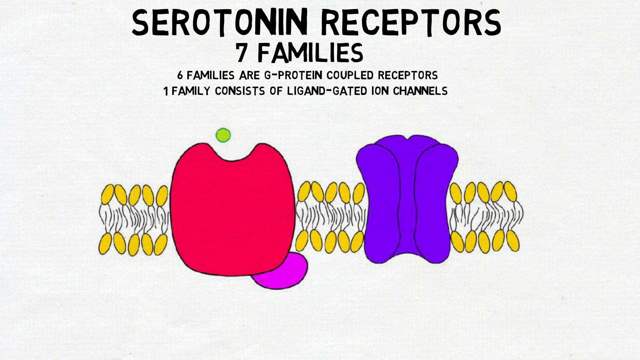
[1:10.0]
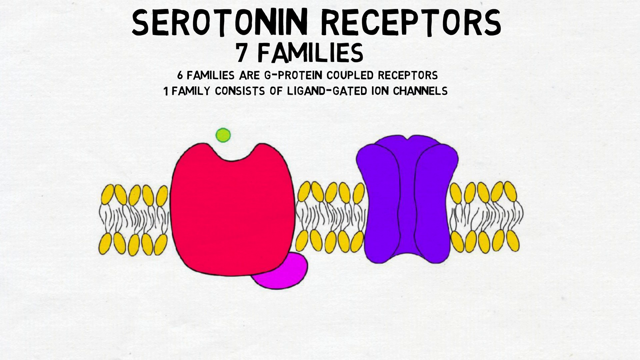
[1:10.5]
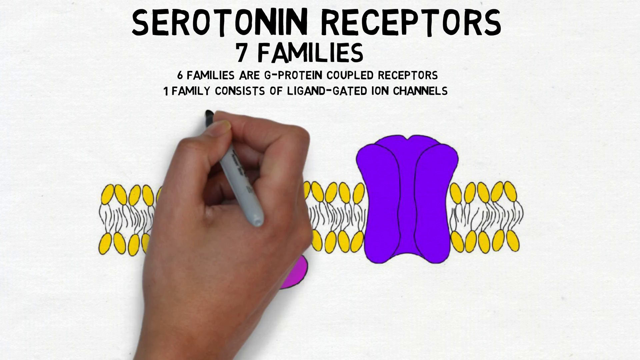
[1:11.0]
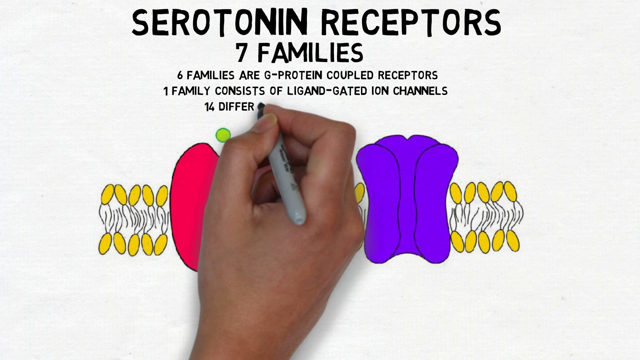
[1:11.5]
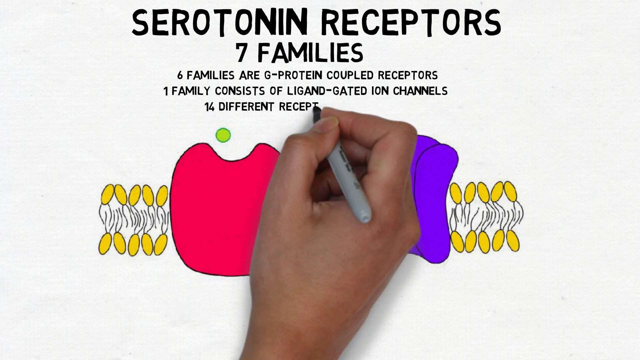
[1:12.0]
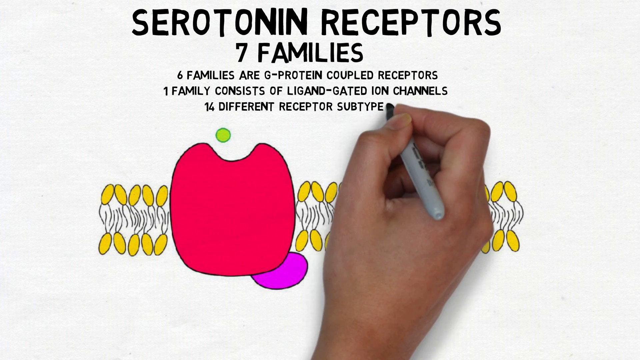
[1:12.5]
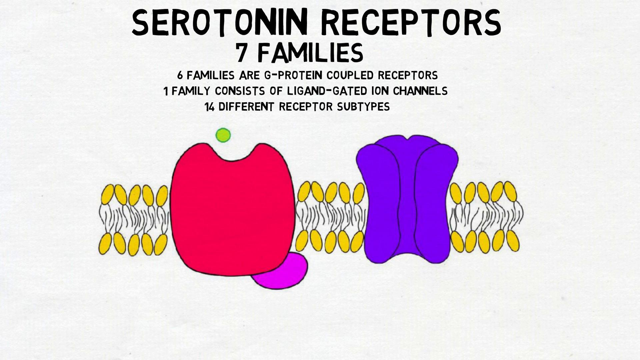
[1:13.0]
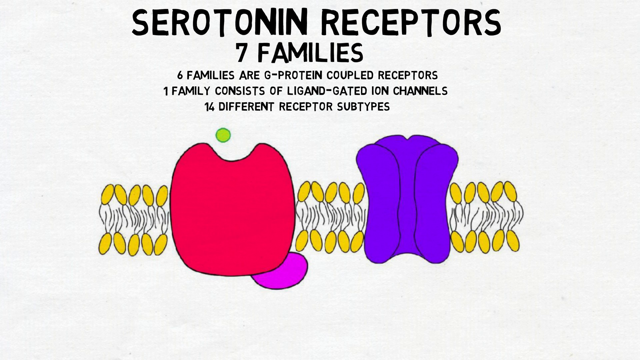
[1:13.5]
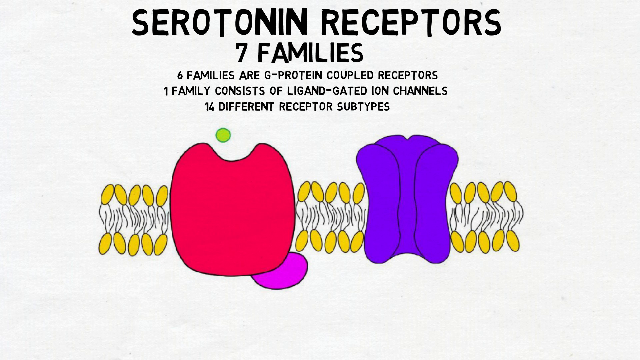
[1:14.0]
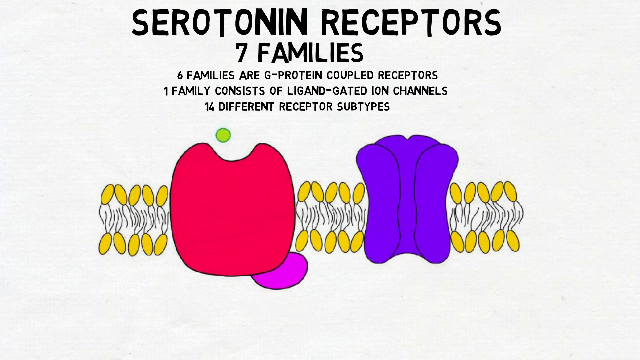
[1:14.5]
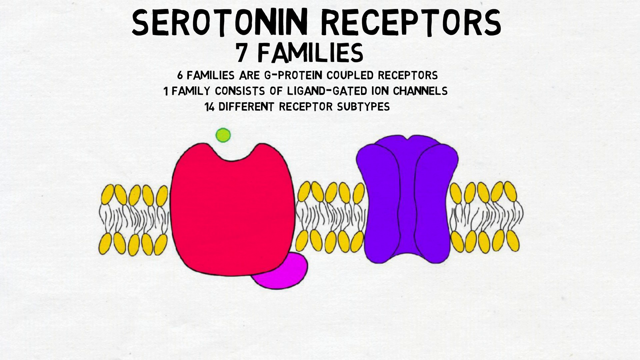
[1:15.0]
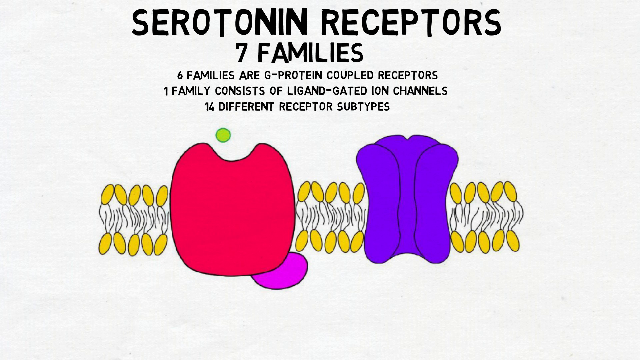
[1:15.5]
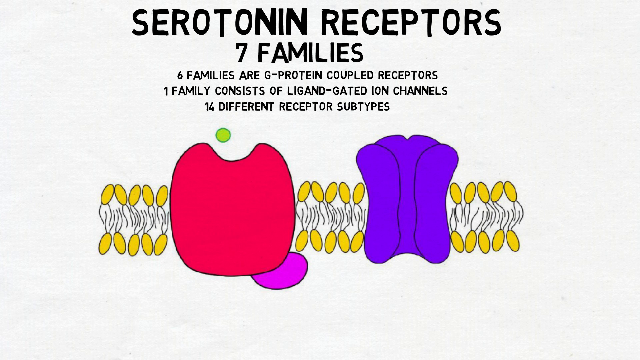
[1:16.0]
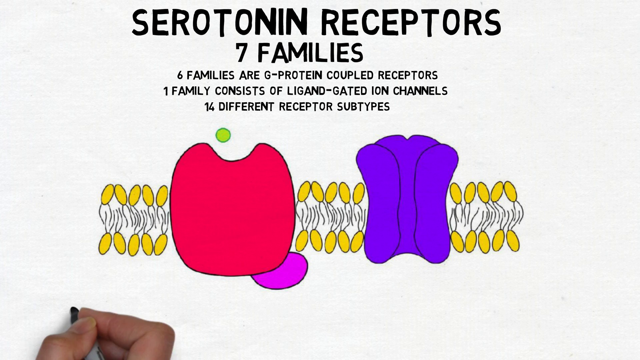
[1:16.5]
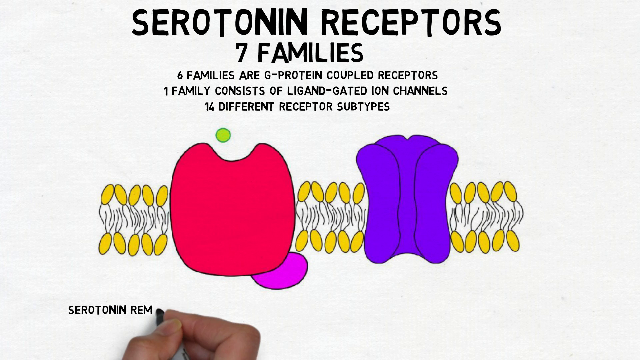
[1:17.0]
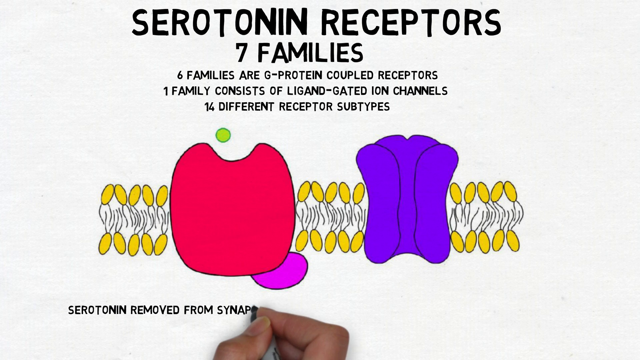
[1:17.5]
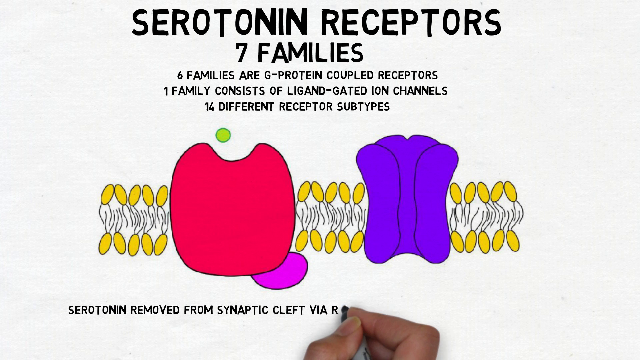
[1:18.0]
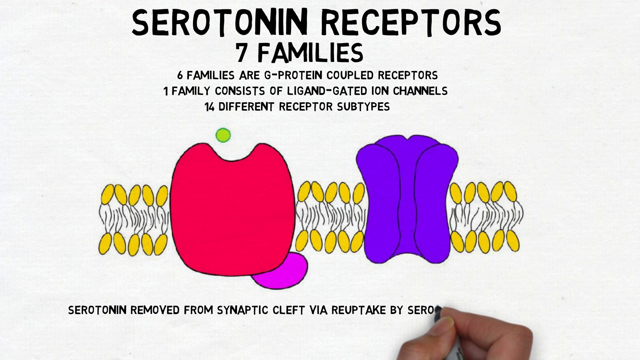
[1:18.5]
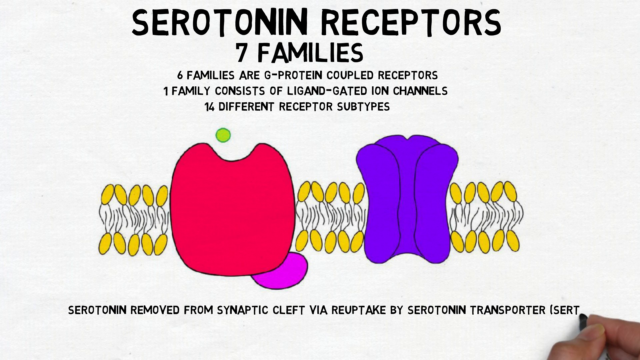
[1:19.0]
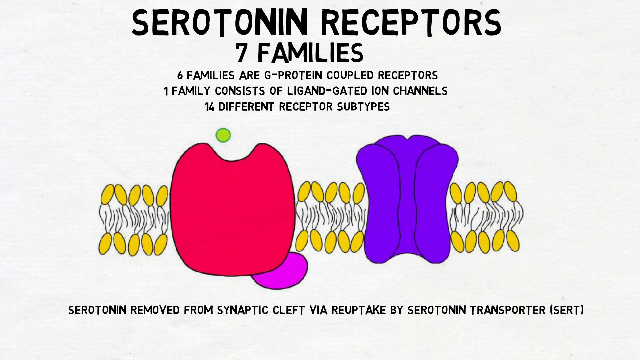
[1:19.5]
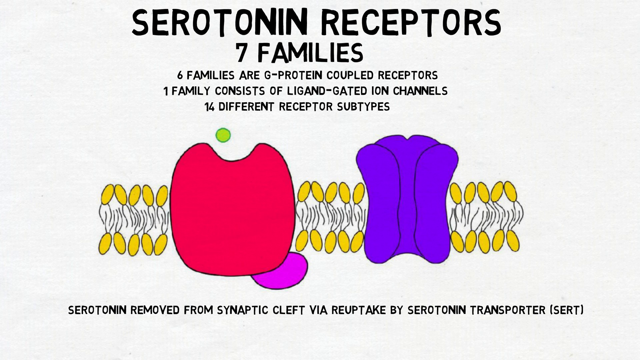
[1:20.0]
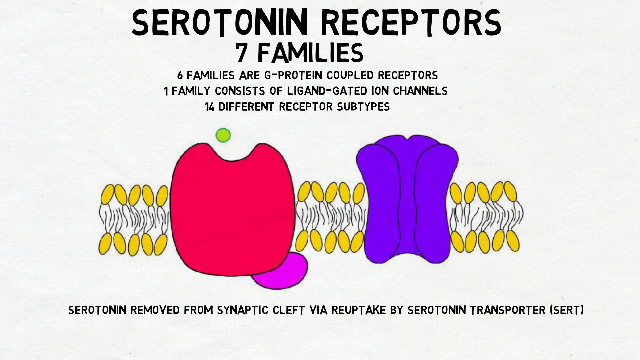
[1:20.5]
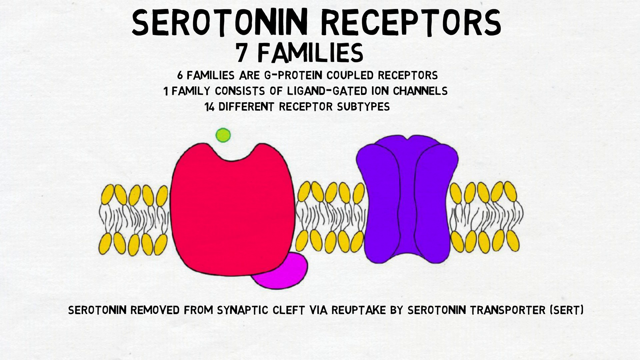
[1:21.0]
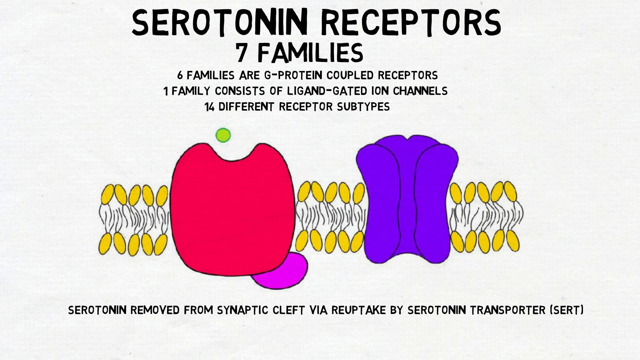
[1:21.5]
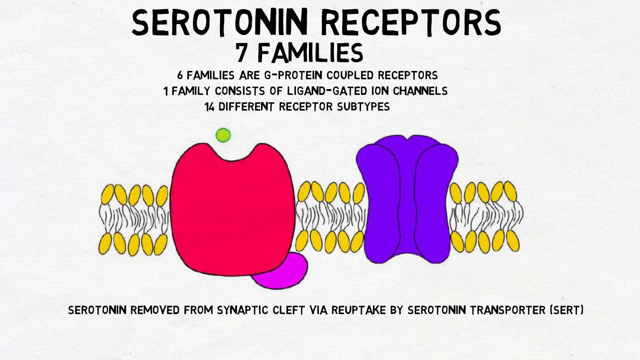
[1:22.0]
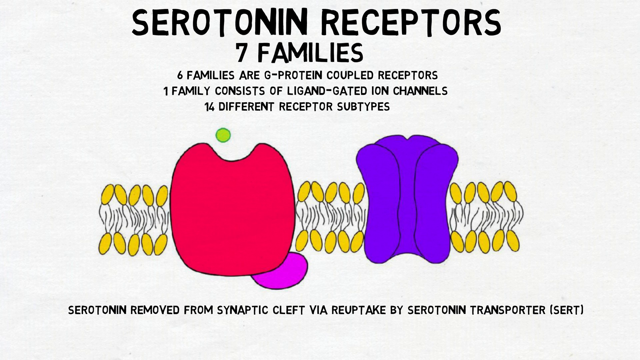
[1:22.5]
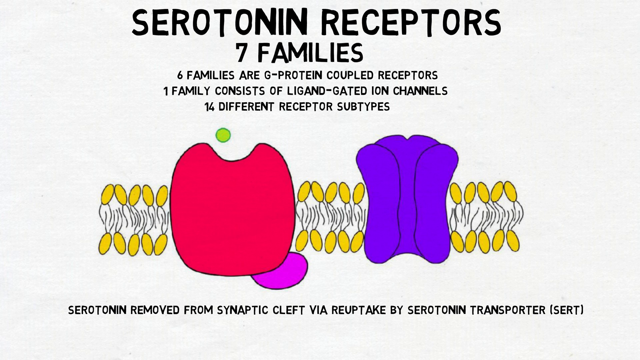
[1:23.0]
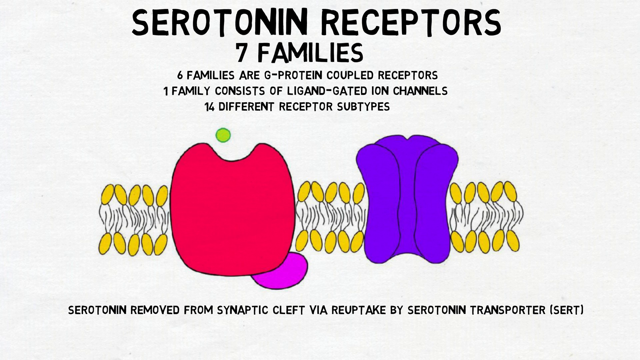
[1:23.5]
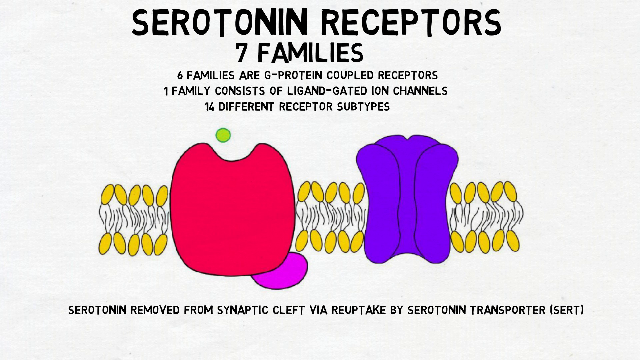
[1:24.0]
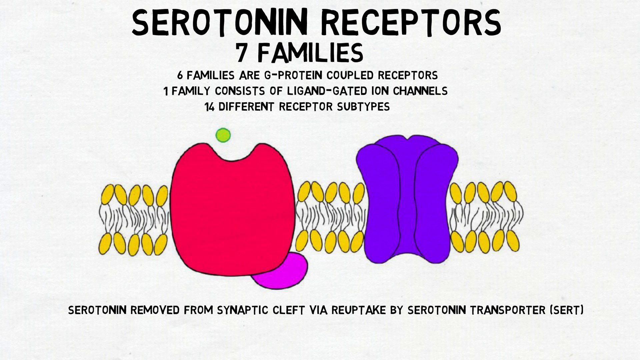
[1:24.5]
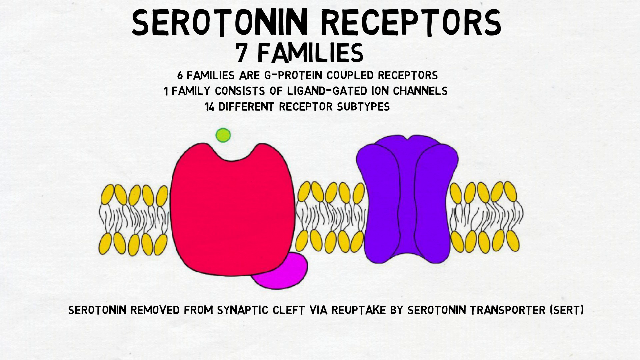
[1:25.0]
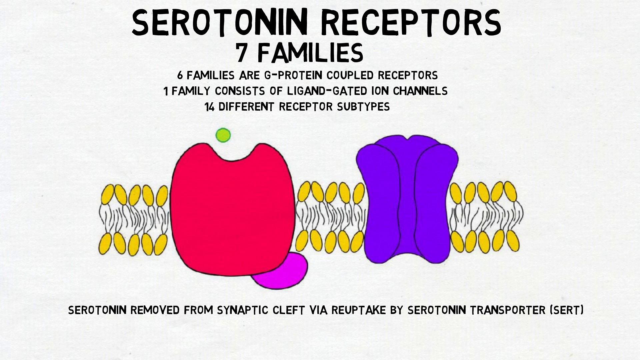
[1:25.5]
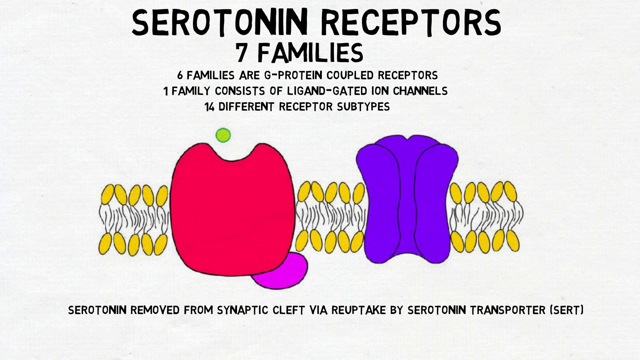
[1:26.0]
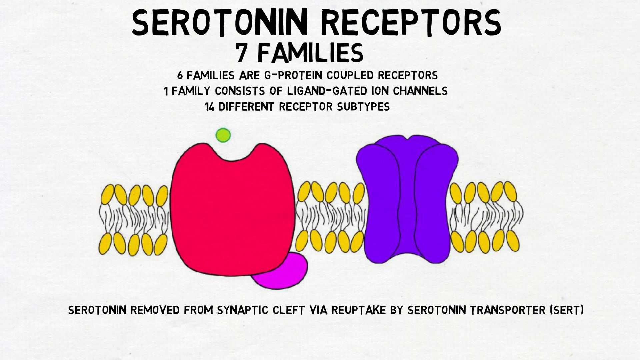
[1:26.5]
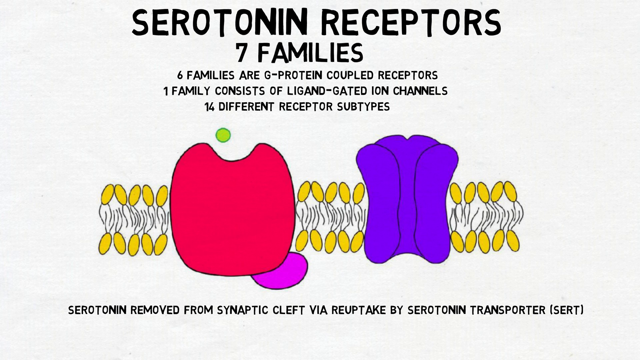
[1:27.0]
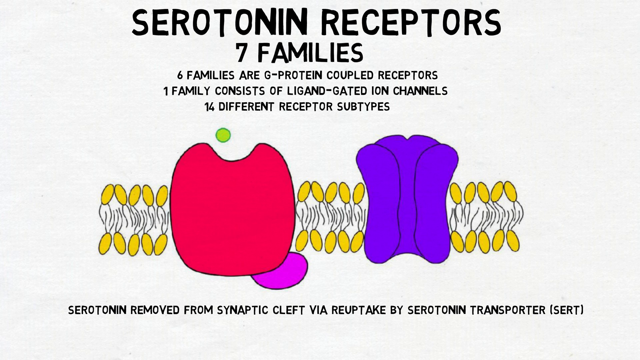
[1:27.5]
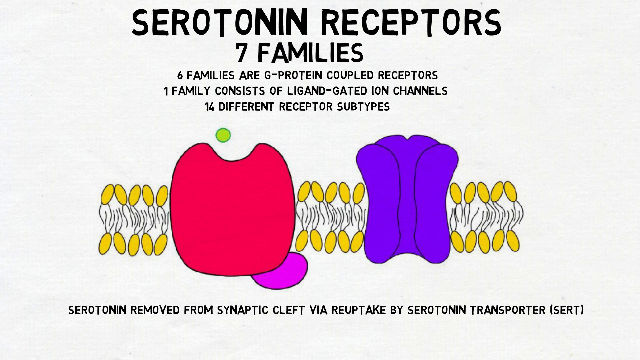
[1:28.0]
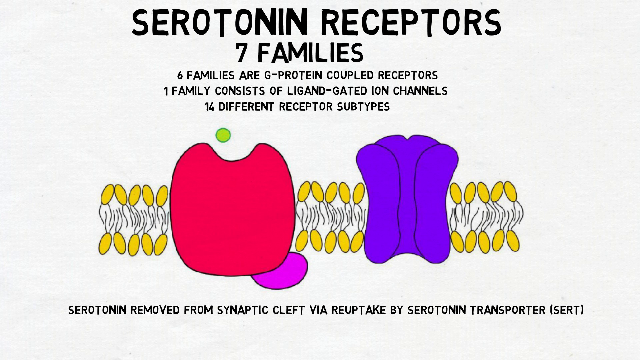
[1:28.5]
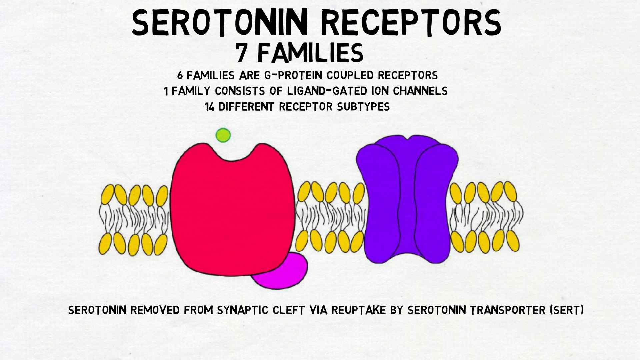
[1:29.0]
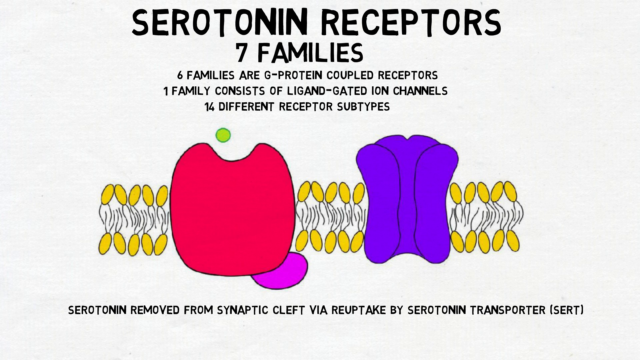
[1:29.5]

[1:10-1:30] The white screen has "serotonin receptors" written in black at the very top, with "seven families" underneath, then "six families are G-protein coupled receptors," then "one family consists of ligand-gated ion channels." Below that, in the middle of the screen to the left, is a light red design that looks like an apple with a small green dot floating above it. To its right is a dark purple design that looks like a smaller, skinnier apple, and the two are connected by curvy lines with yellow oval shapes at their tips. The hand comes back into frame and writes underneath the other writing at the top "one fourth different receptor subtypes." It then writes underneath the designs in the middle "serotonin removed from synaptic cleft via reuptake by serotonin transporter," and in parentheses the word "sert."